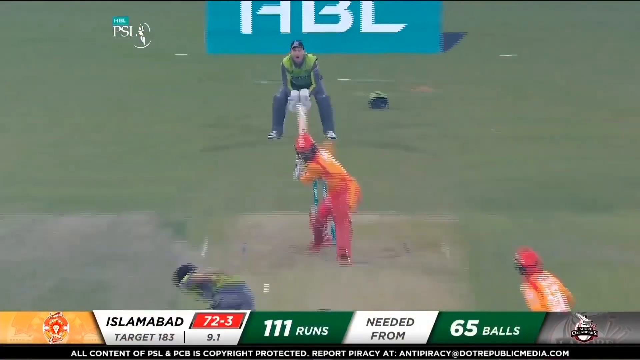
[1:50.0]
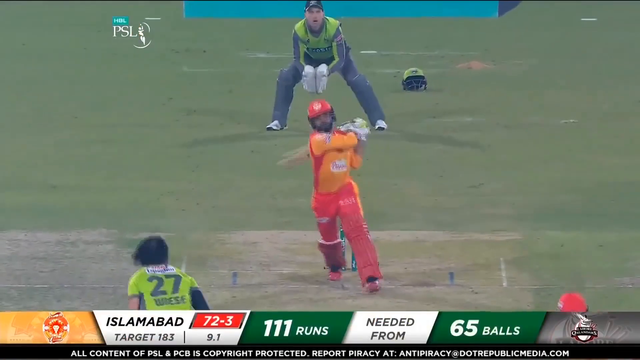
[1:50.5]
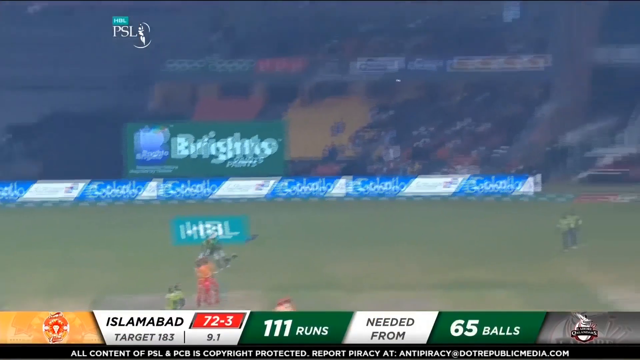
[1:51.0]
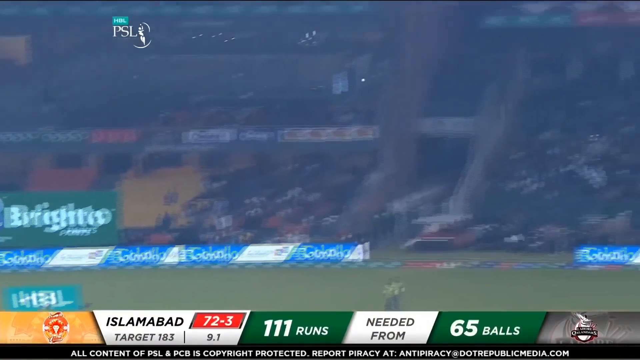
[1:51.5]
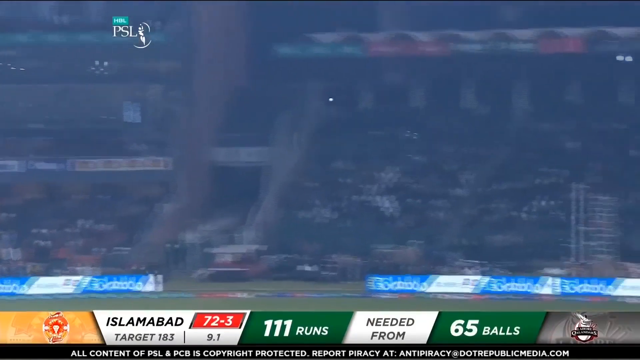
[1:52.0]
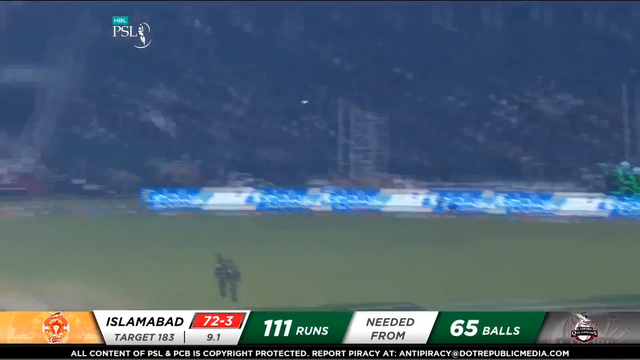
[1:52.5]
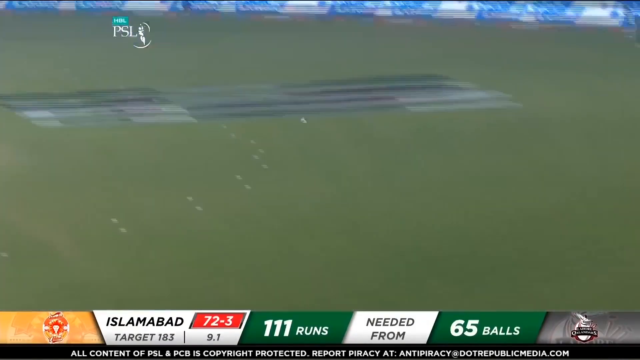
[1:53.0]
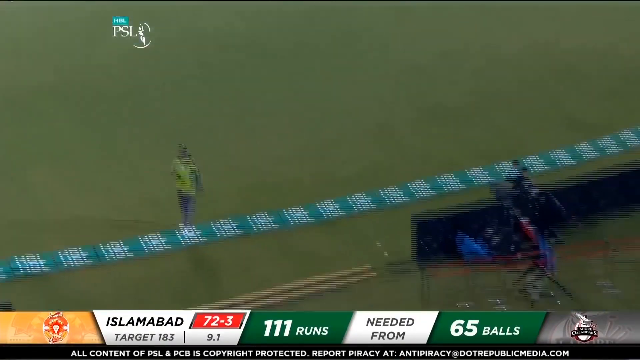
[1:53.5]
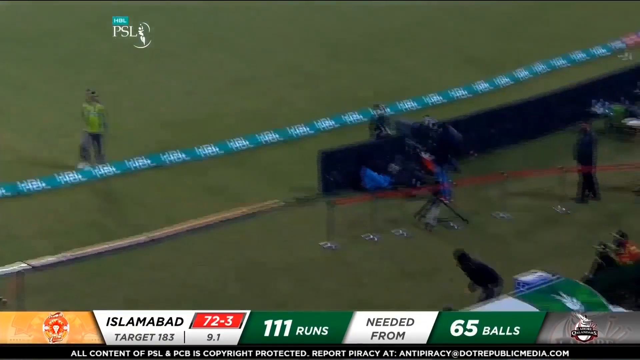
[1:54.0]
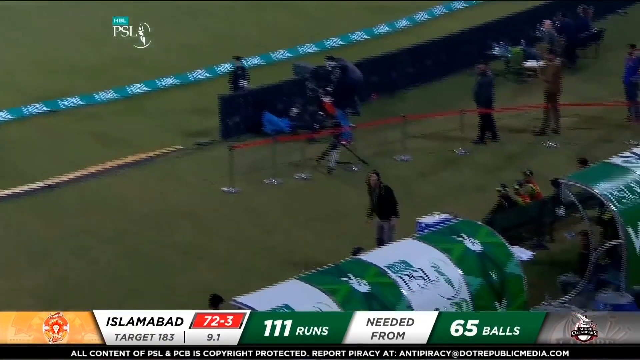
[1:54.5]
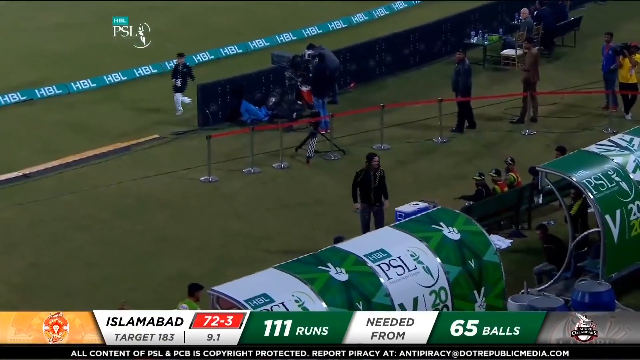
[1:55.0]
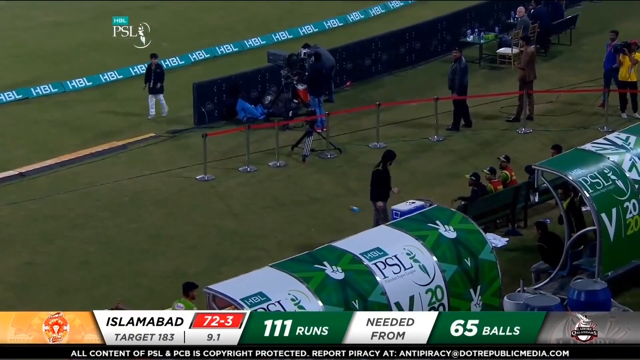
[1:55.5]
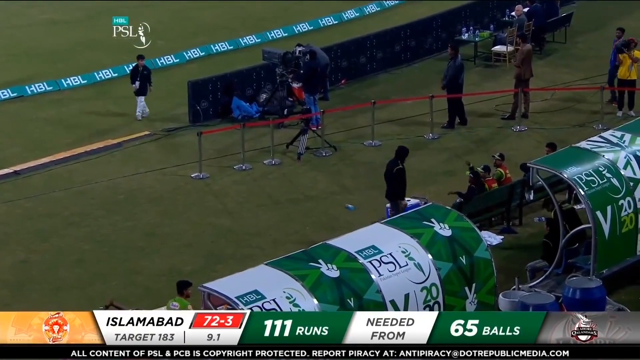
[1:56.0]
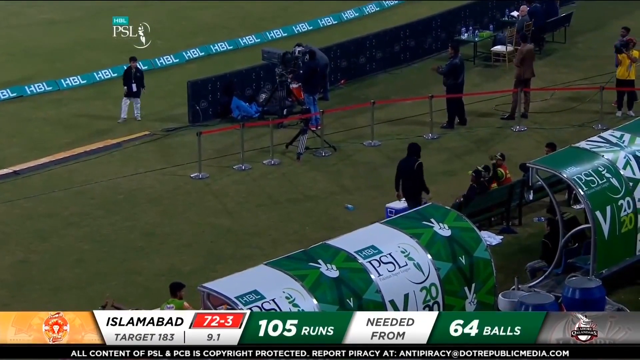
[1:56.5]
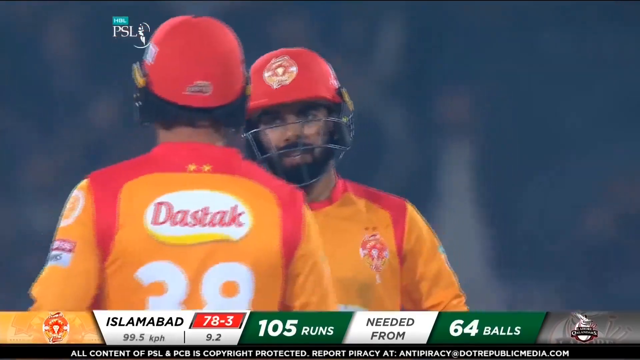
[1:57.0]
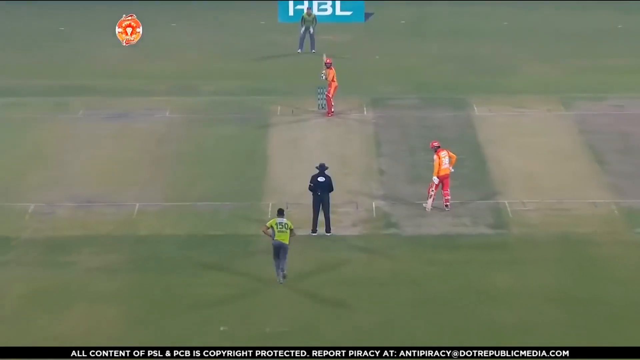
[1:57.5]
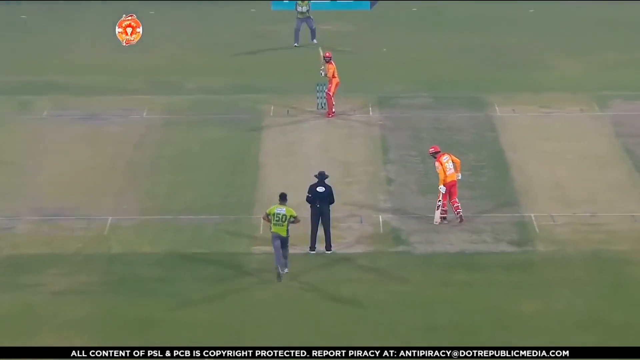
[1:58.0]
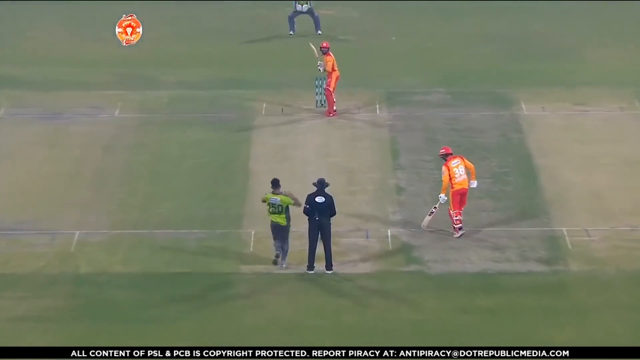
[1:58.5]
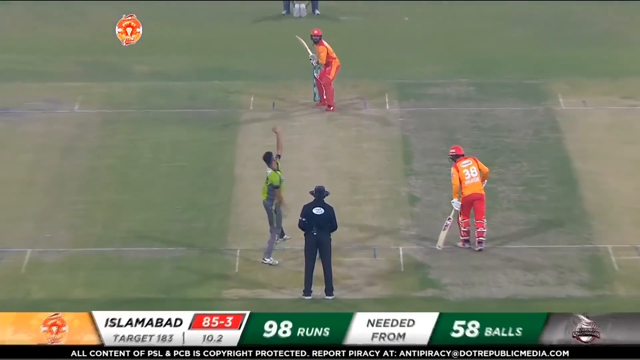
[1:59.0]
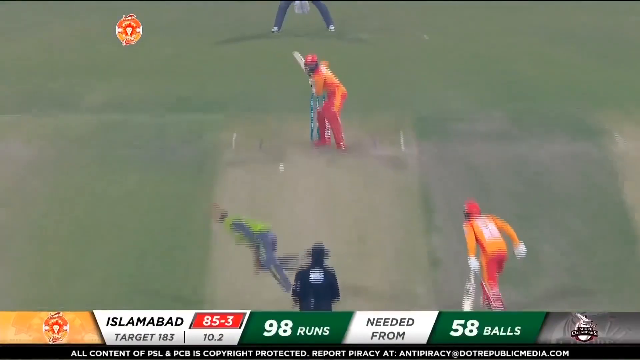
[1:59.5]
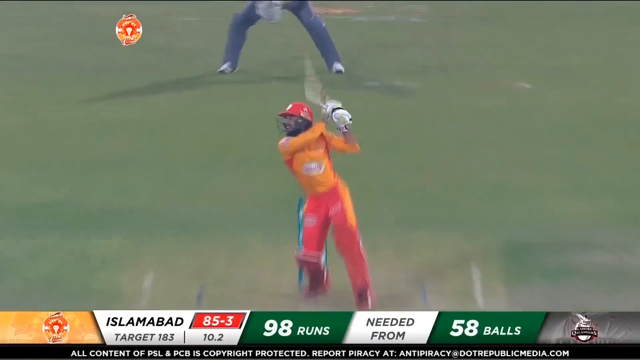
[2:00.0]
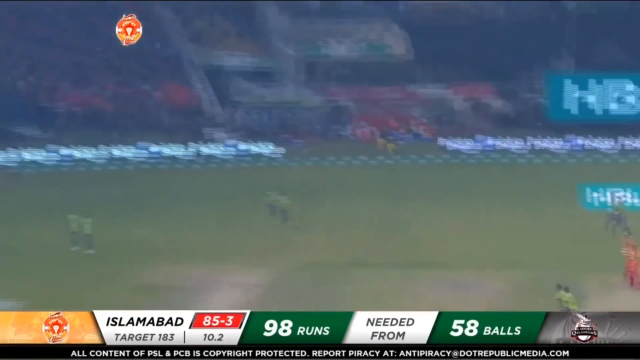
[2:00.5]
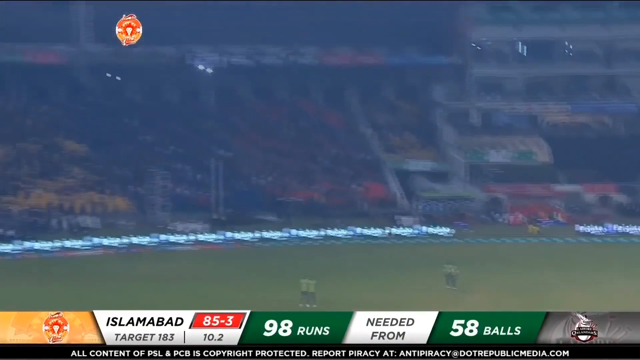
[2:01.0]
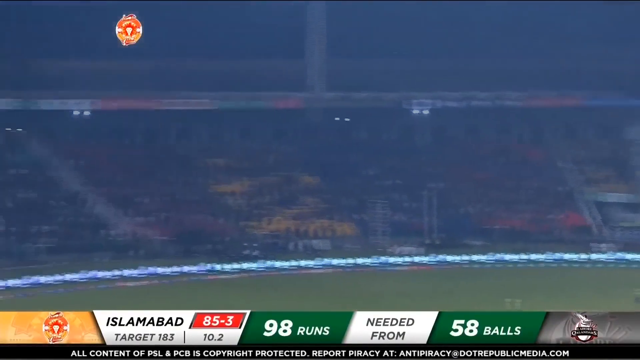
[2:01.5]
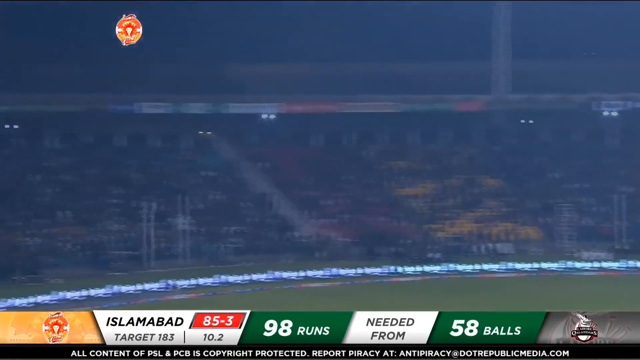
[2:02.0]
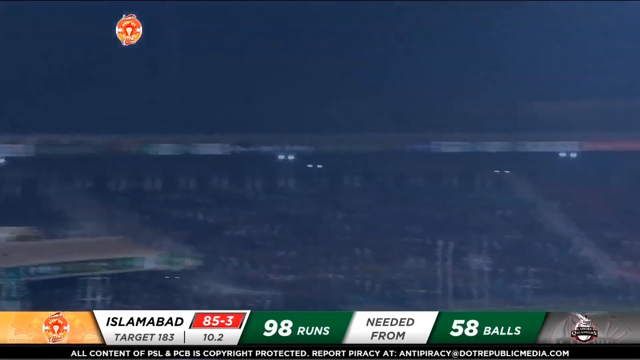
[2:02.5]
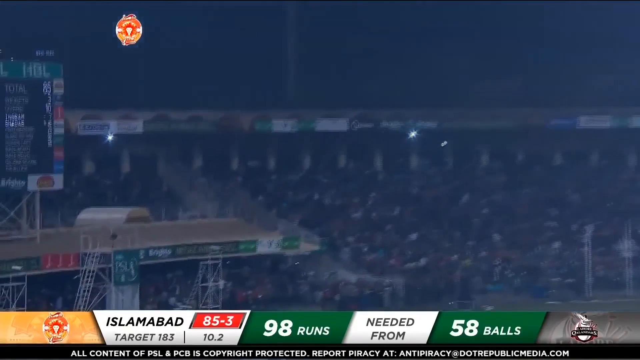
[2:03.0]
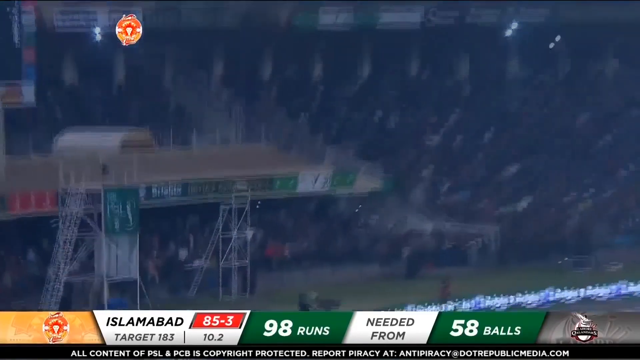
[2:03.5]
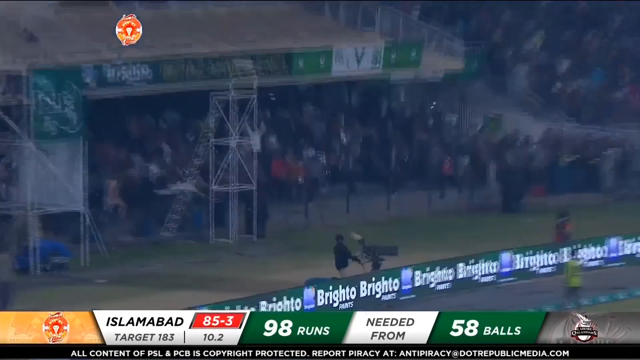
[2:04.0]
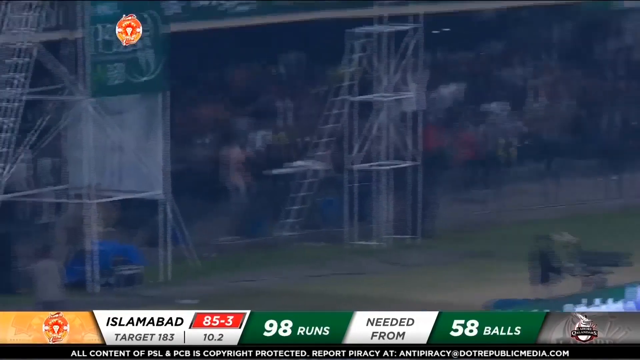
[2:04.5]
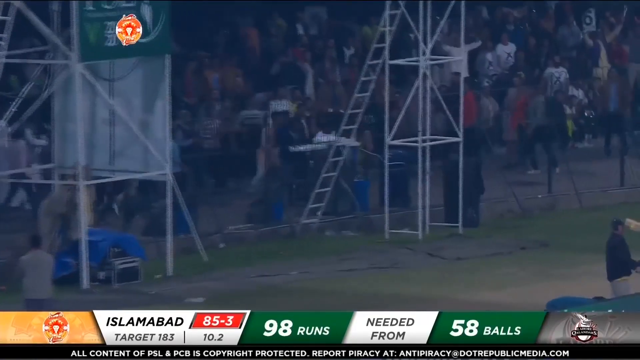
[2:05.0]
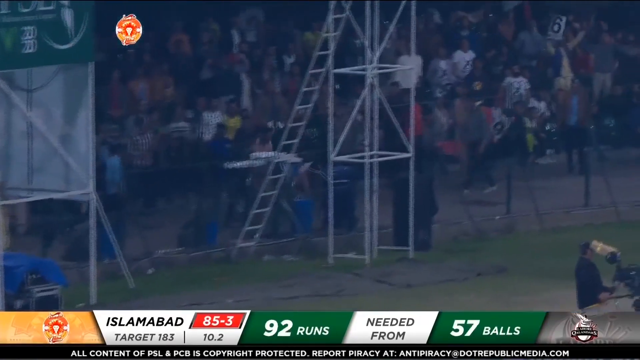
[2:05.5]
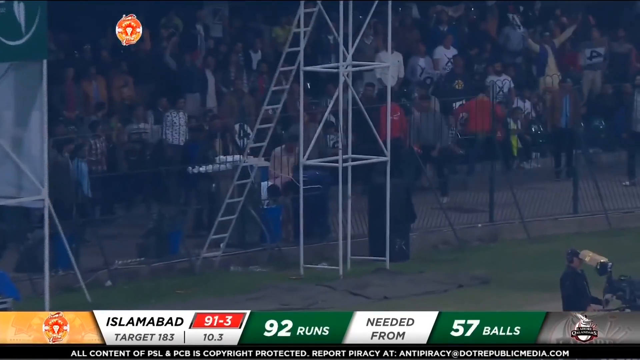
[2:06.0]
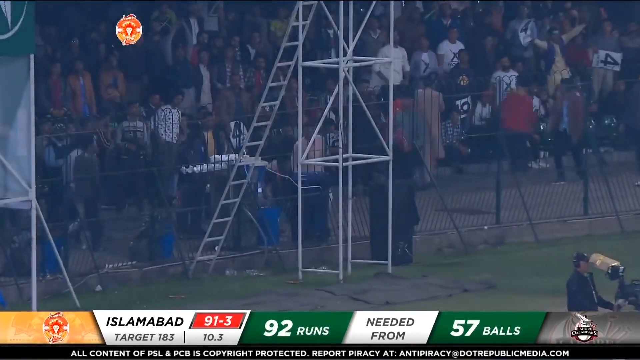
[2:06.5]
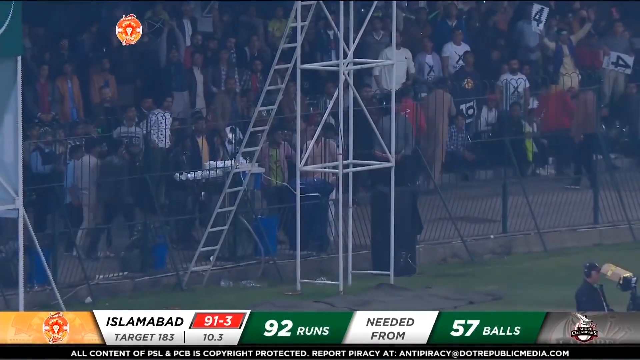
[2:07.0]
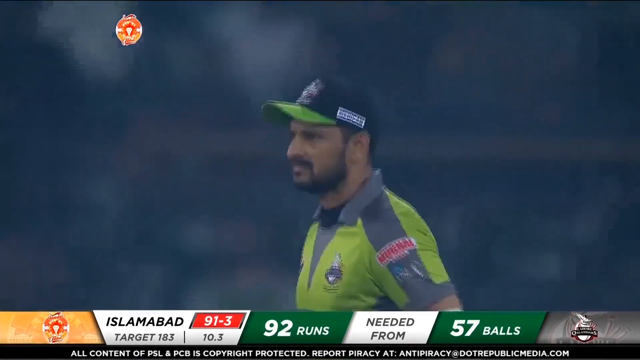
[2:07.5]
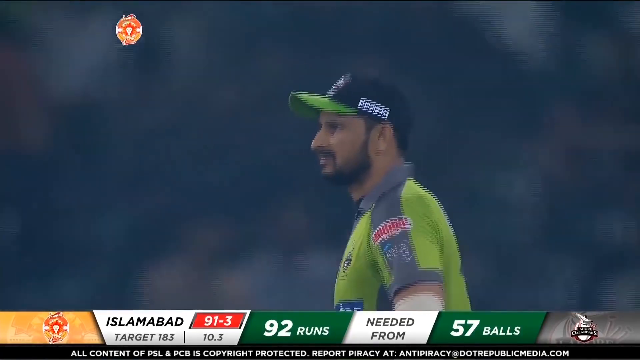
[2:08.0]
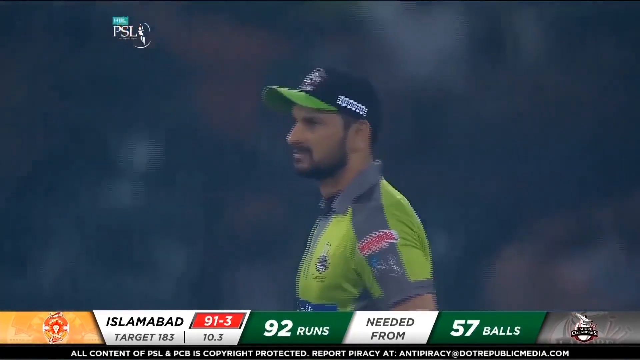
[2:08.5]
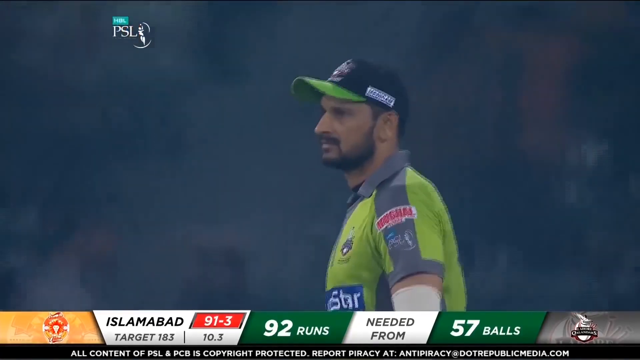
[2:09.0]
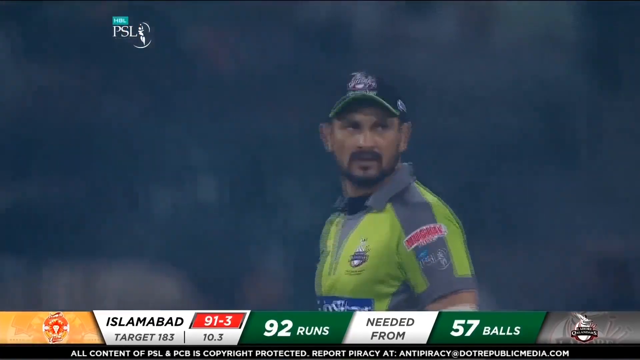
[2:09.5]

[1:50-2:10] One of the batsmen hits another big six, and the highlights then show a second six. Islamabad's score rises to 91 for three, and they still need 92 runs from 57 balls. The opposition captain does not look too happy. The sixes are replayed: for the first, the batsman hits from just in front of his right-hand side and pulls the ball across to the left, clearing the field easily. For the second, a right-handed bowler runs in on the left-hand side of the wicket, and the batsman middles the ball, hitting it off to the right, over the boundary and over a TV cameraman.